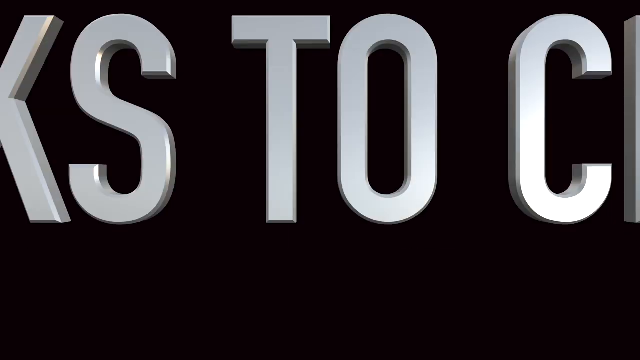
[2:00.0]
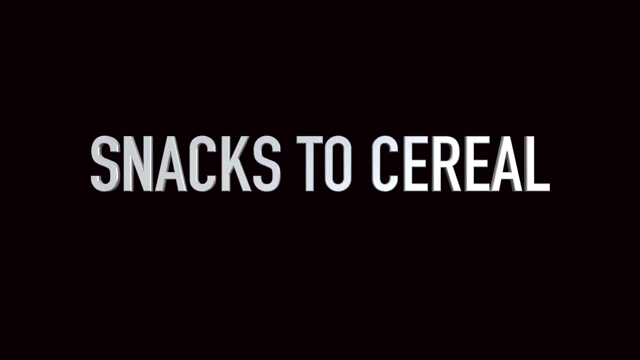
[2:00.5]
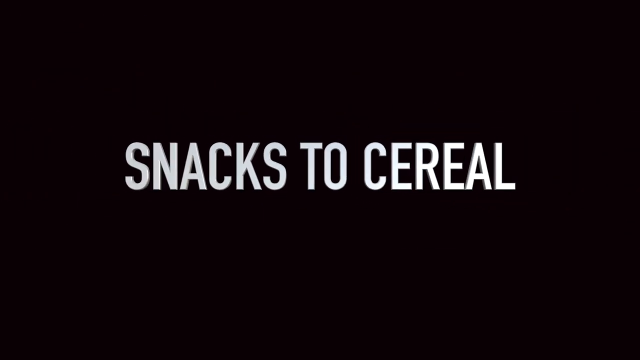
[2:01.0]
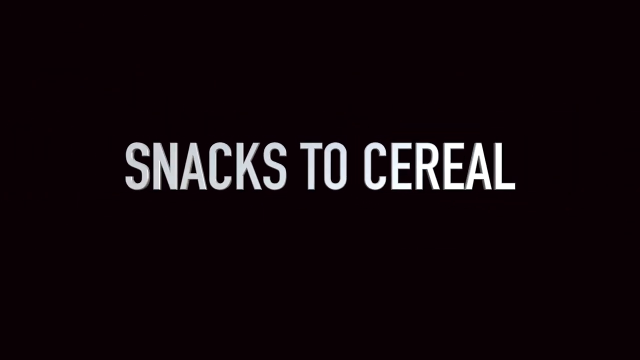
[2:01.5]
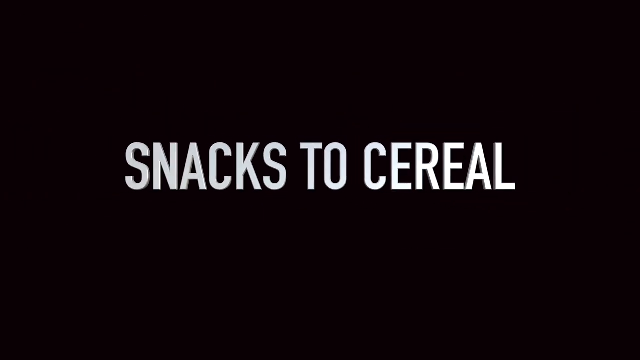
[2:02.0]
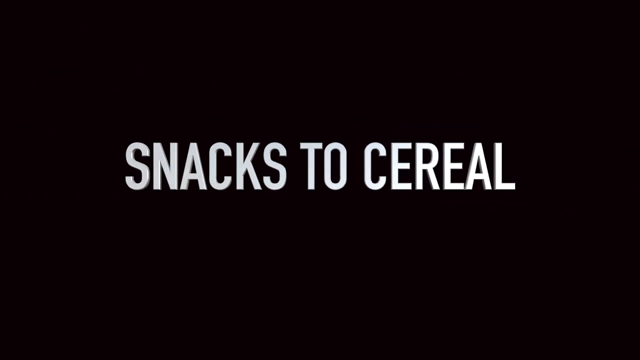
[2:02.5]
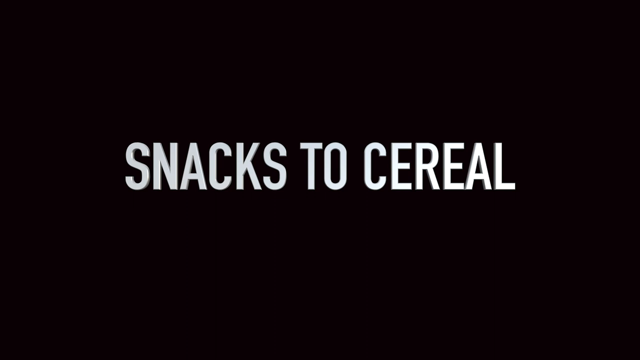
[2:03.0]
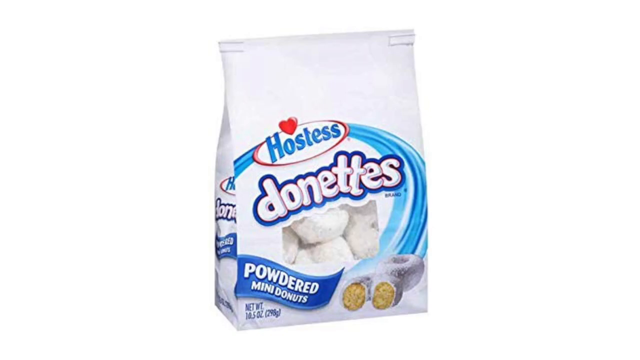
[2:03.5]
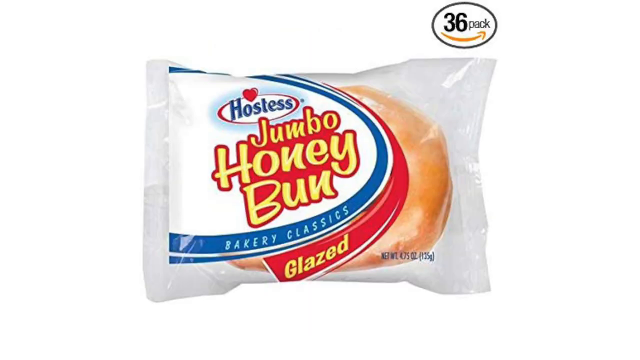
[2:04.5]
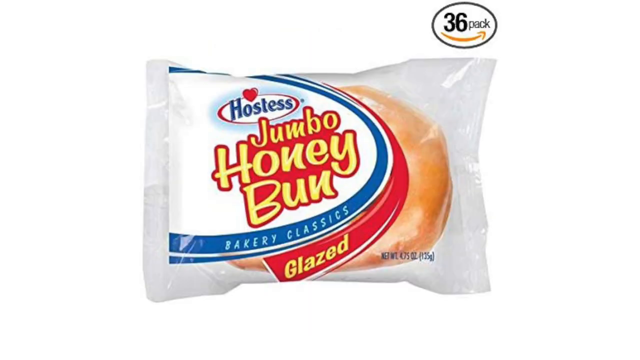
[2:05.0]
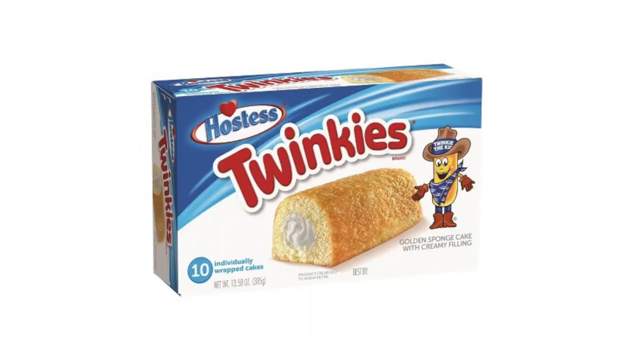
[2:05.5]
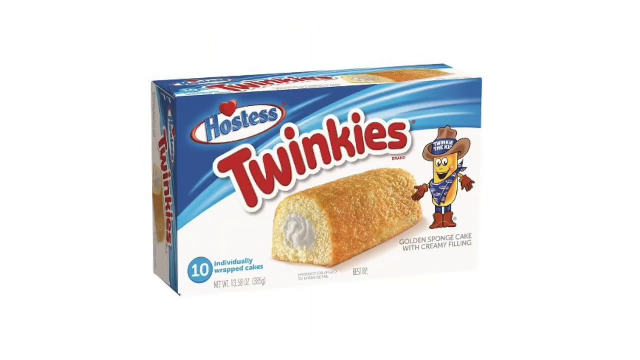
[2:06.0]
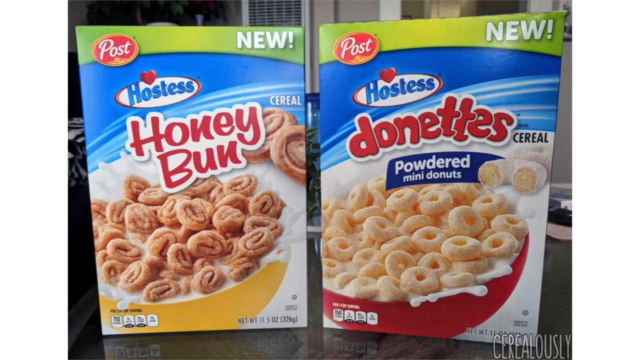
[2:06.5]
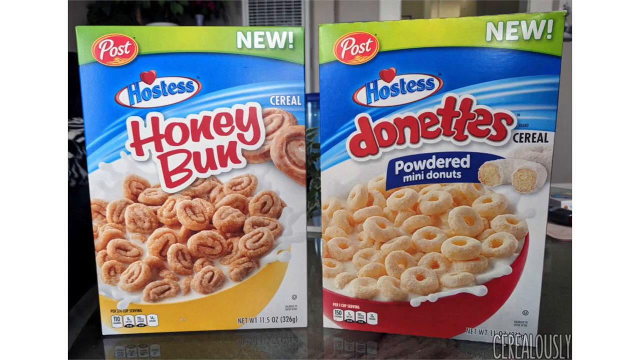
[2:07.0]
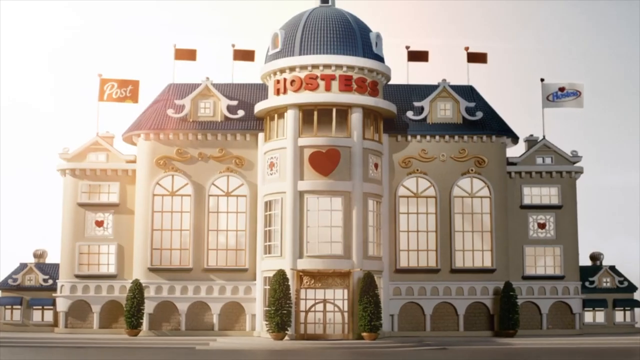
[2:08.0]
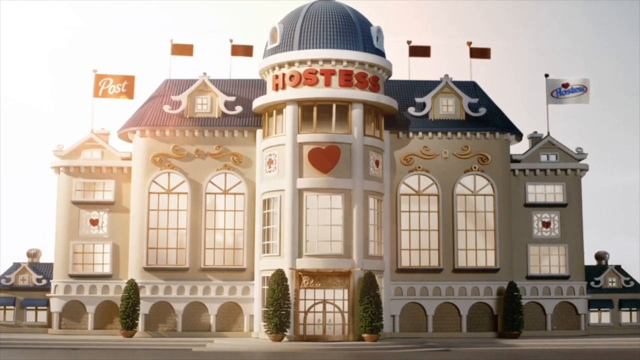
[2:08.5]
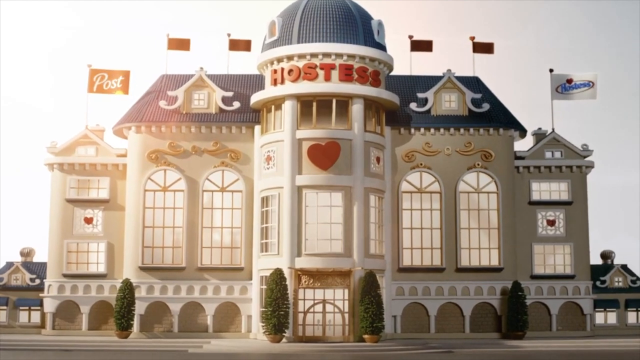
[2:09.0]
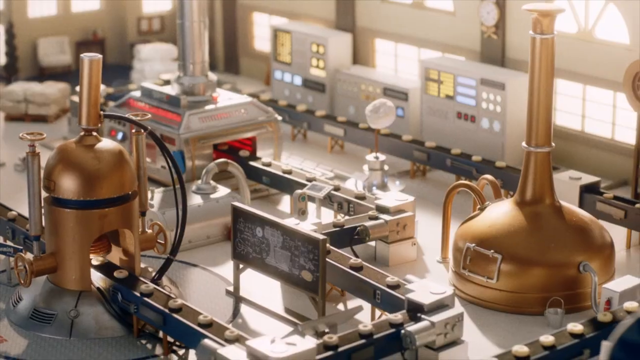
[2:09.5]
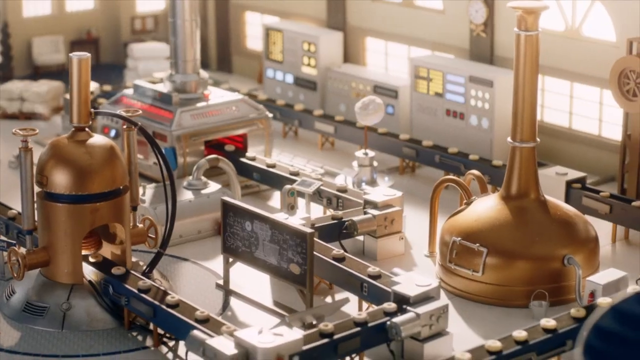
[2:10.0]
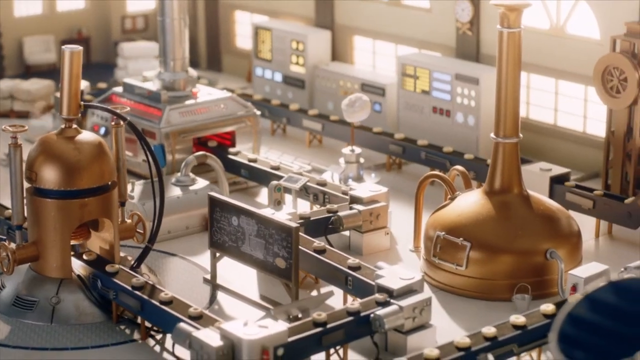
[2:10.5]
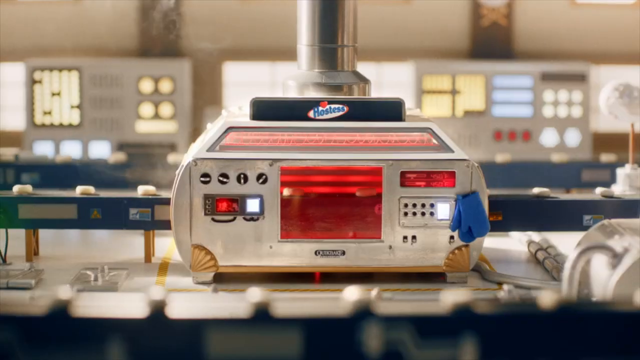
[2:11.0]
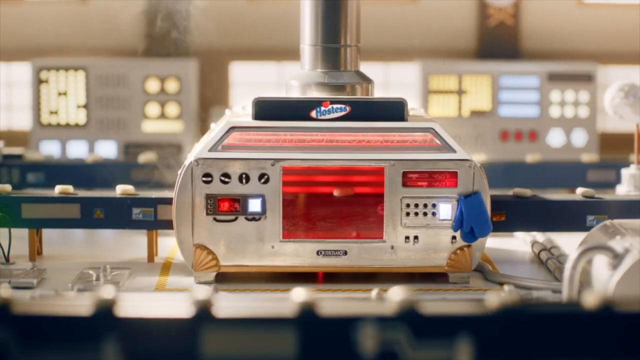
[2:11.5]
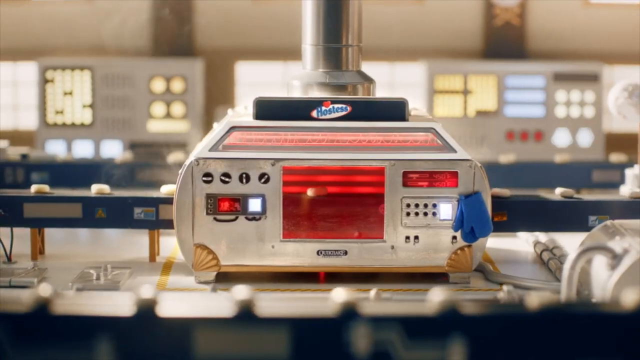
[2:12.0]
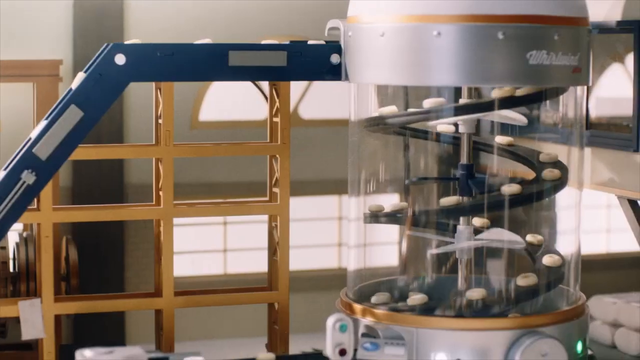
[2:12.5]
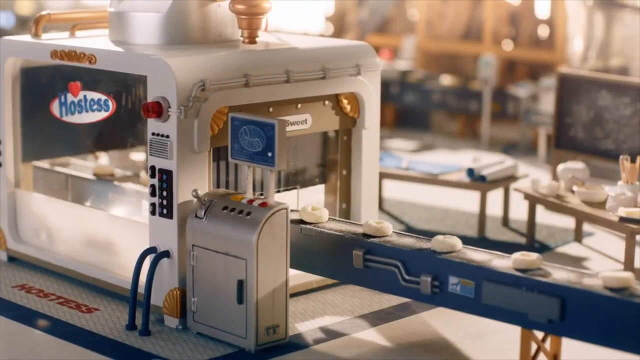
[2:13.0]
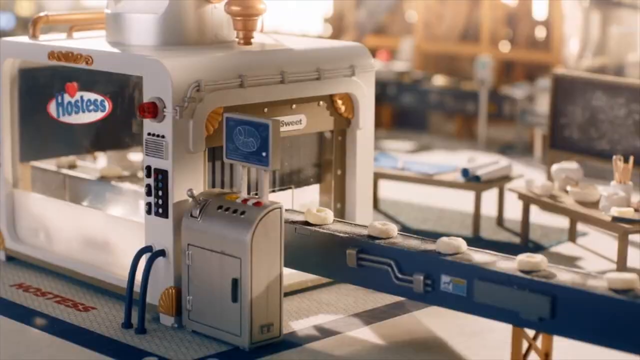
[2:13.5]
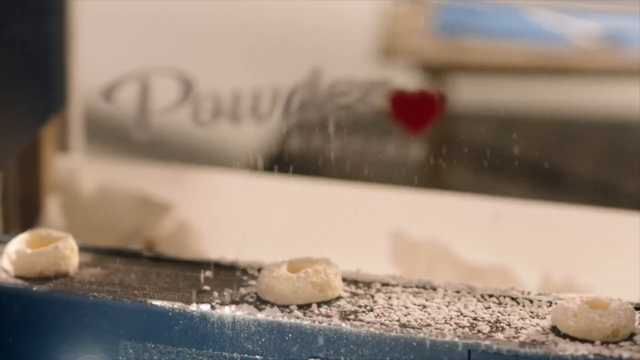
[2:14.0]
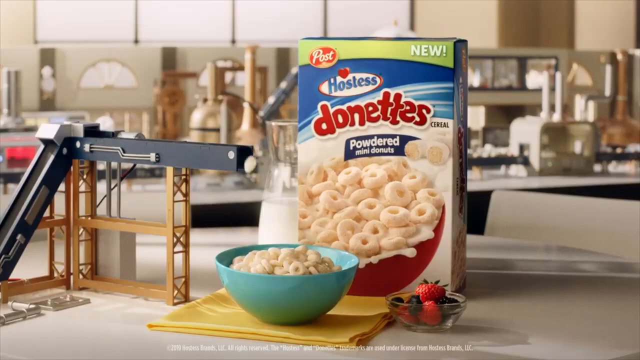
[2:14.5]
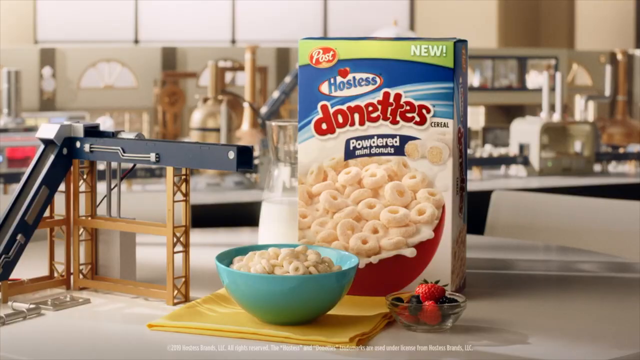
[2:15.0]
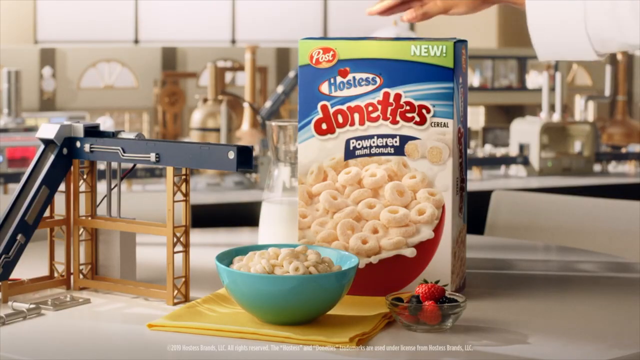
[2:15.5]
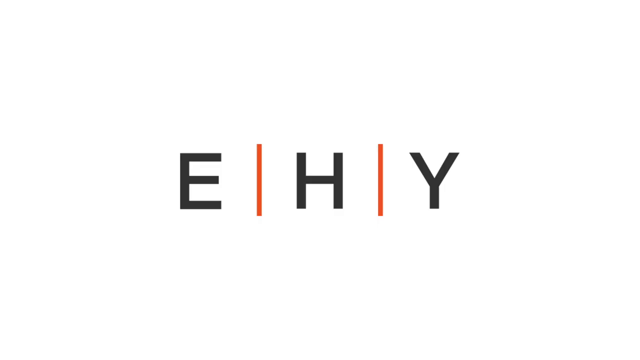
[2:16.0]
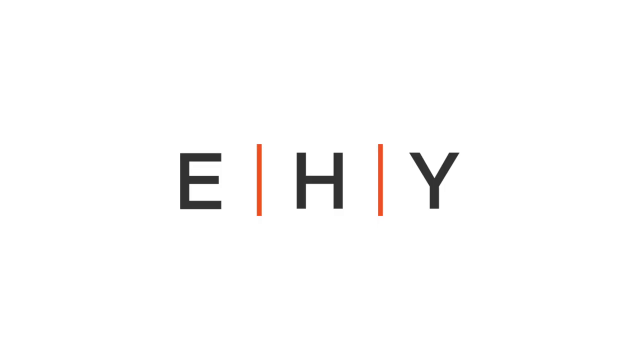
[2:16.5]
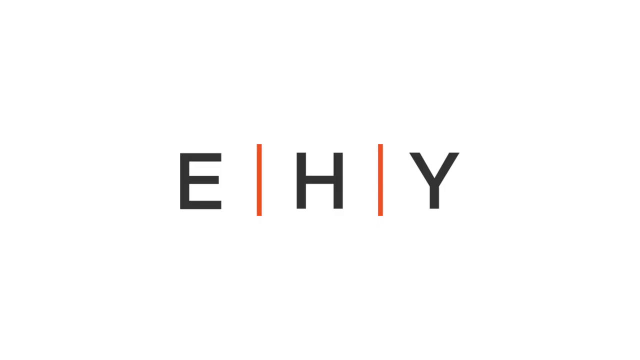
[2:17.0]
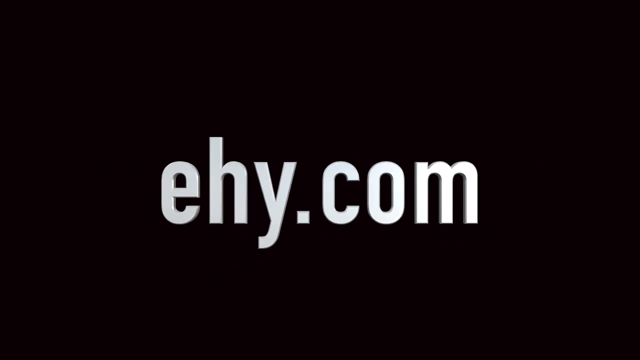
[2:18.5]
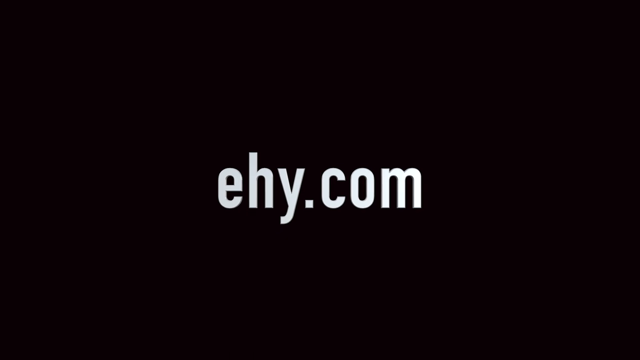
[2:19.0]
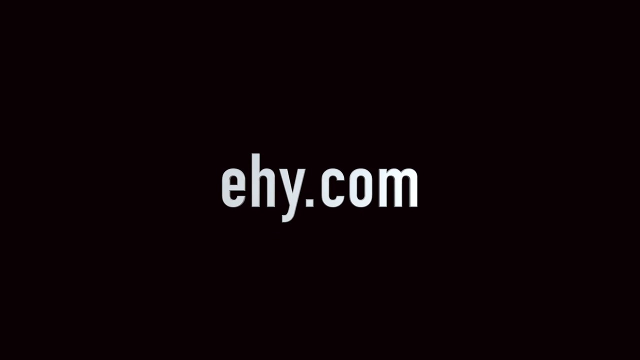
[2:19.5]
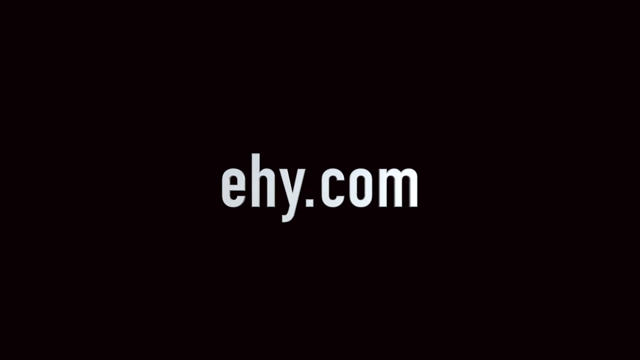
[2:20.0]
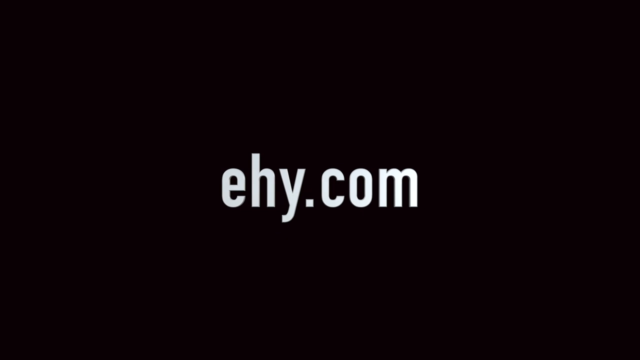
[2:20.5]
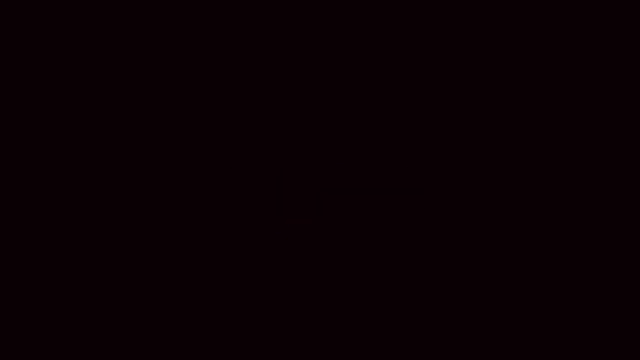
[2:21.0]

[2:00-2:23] White text on an all-black background reads "snacks to cereals" and gets smaller and smaller. It is replaced by a picture of a bag of Hostess donuts, then another Hostess product called Jumbo Honey Bun, then a packet of Hostess Twinkies. Next, Hostess Honey Bun cereal is on the left and Hostess Donuts cereal on the right. A kind of make-believe Hostess house or factory where these products are made appears; the view zooms in on it, showing a sort of fantasy version of production, with various conveyor belts and machines as the products move along and are produced. Finally, "EHT" appears in black with orange vertical lines between each letter against an all-white screen, then changes to "ehy.com" in white against an all-black background, which gets smaller and smaller and eventually disappears.